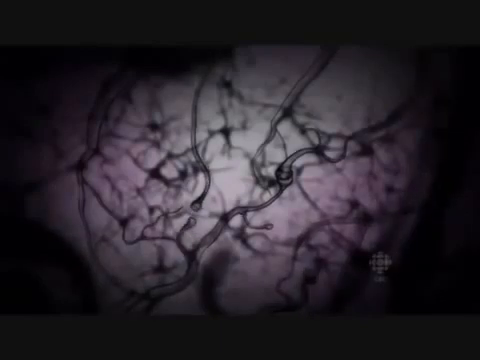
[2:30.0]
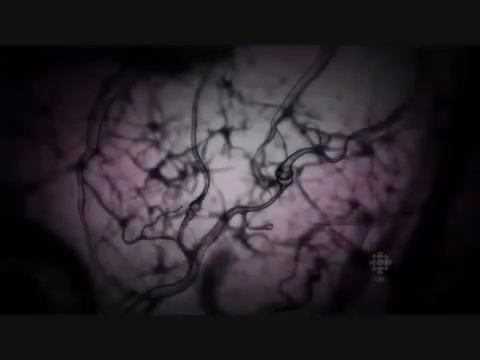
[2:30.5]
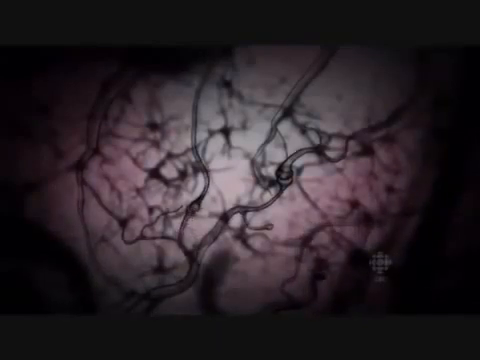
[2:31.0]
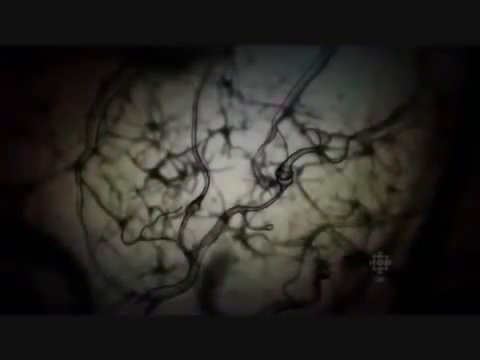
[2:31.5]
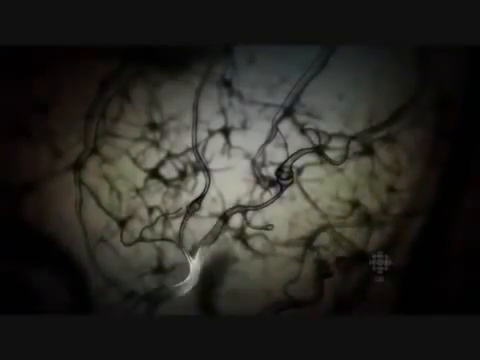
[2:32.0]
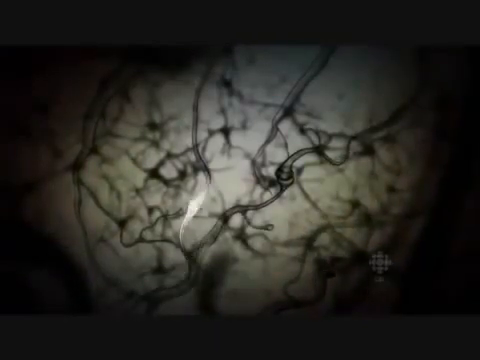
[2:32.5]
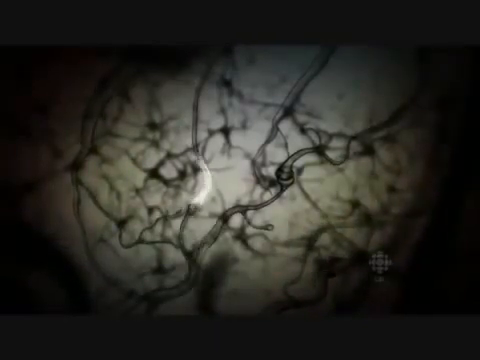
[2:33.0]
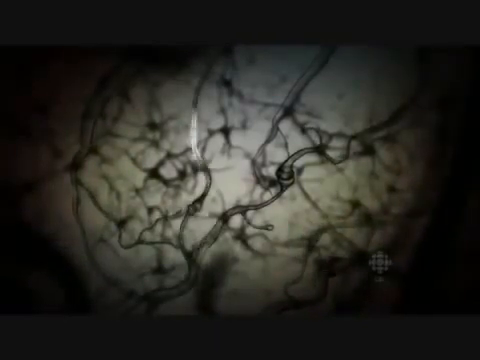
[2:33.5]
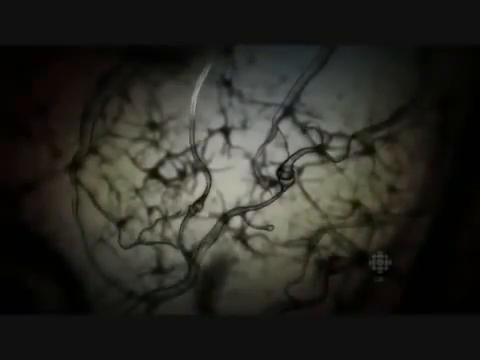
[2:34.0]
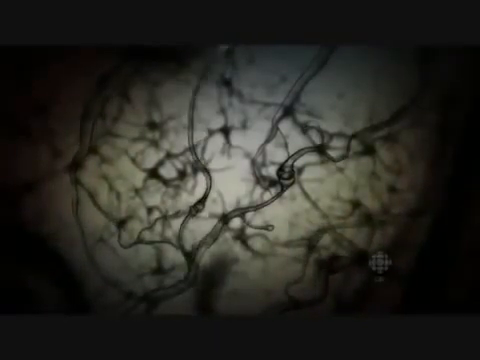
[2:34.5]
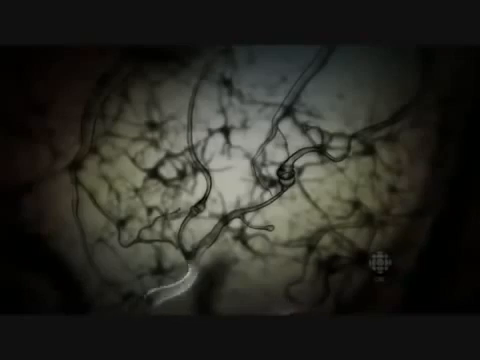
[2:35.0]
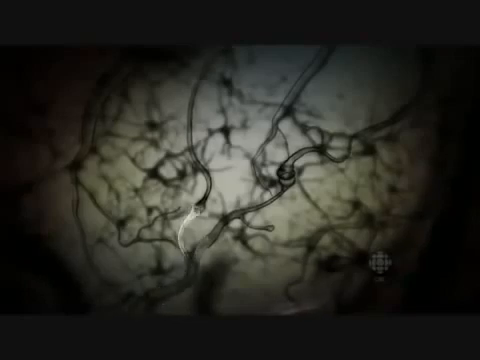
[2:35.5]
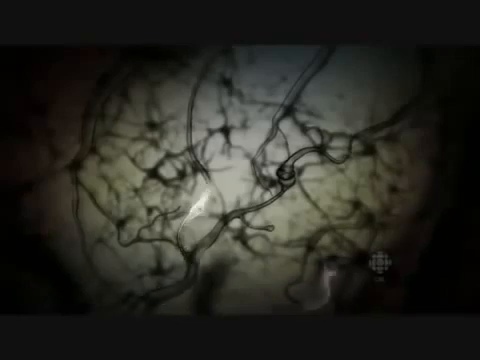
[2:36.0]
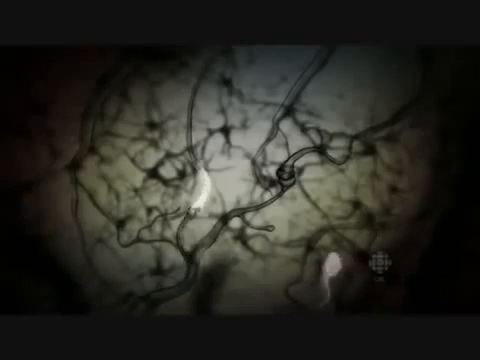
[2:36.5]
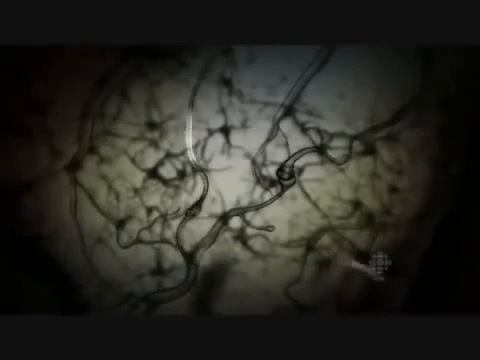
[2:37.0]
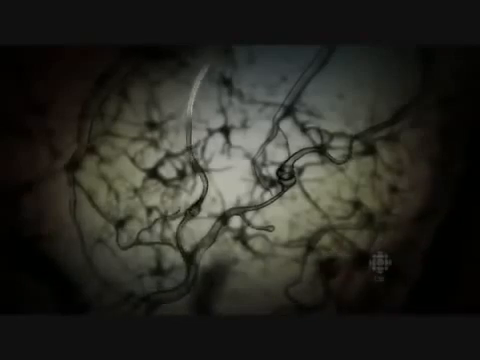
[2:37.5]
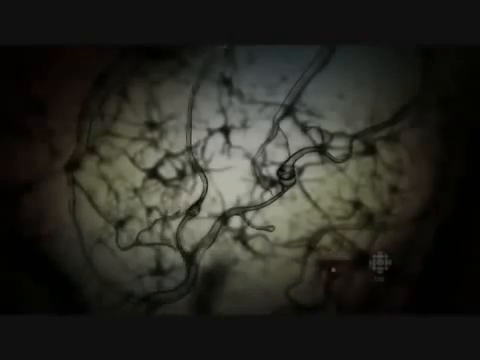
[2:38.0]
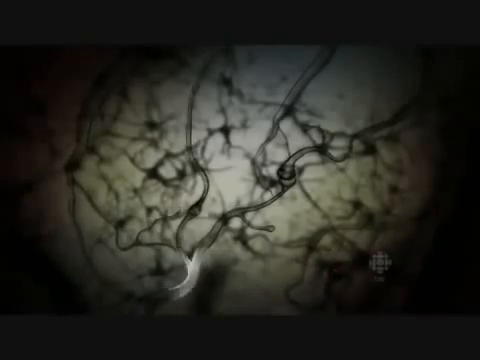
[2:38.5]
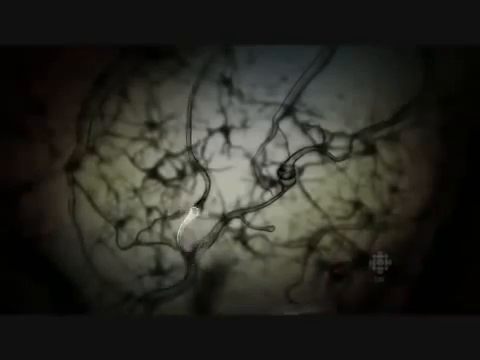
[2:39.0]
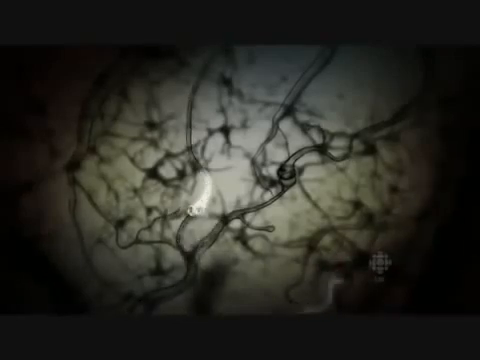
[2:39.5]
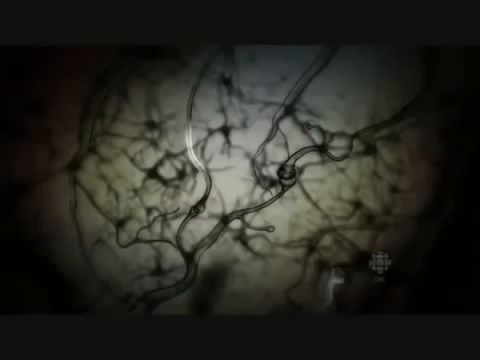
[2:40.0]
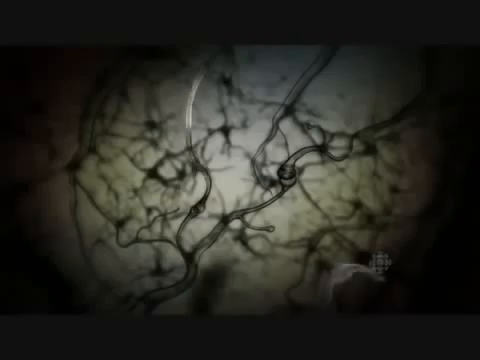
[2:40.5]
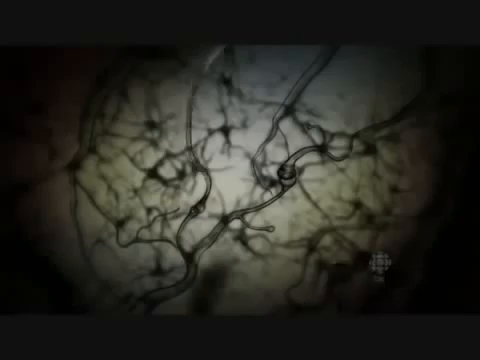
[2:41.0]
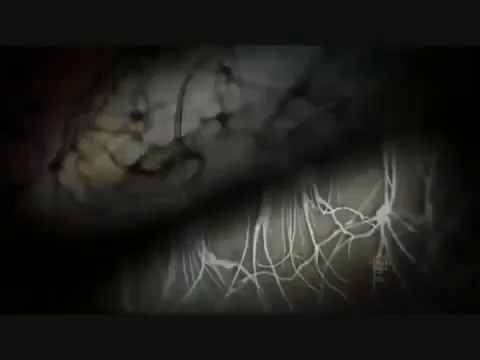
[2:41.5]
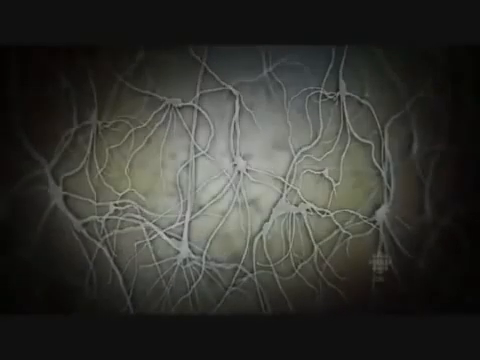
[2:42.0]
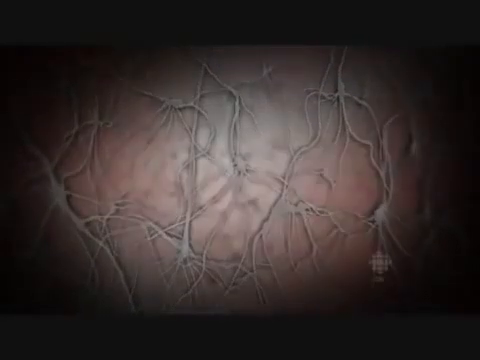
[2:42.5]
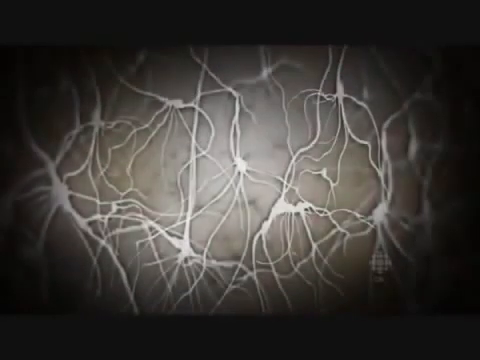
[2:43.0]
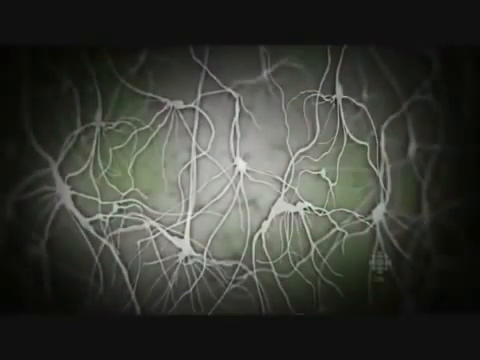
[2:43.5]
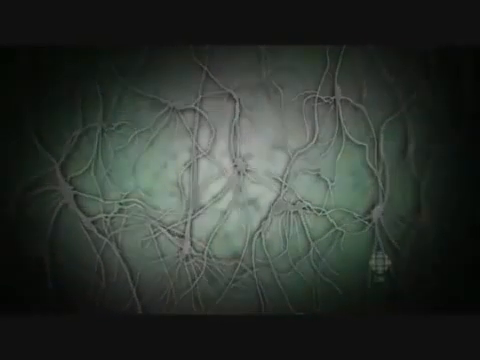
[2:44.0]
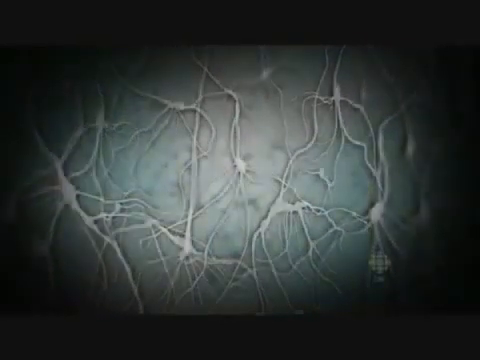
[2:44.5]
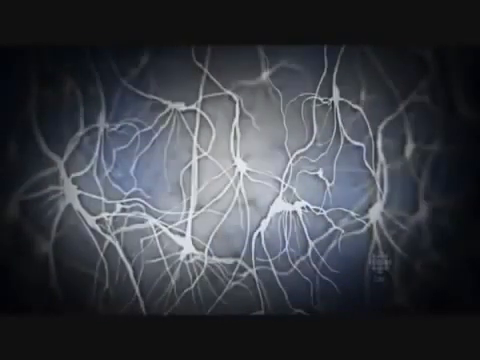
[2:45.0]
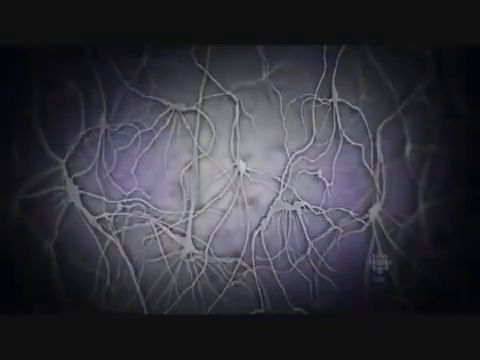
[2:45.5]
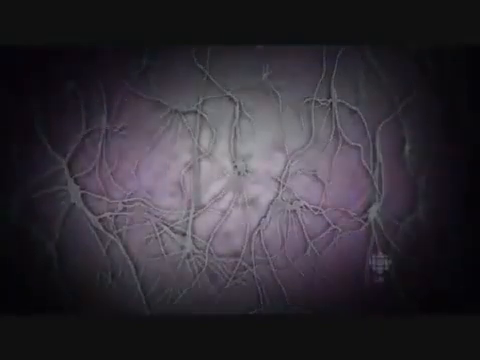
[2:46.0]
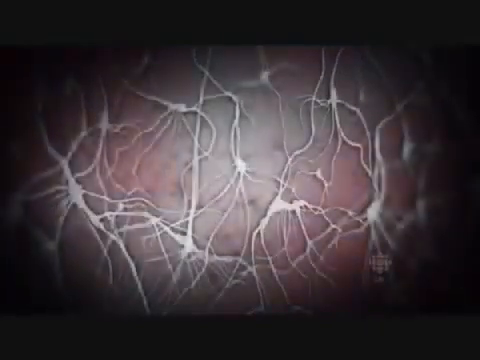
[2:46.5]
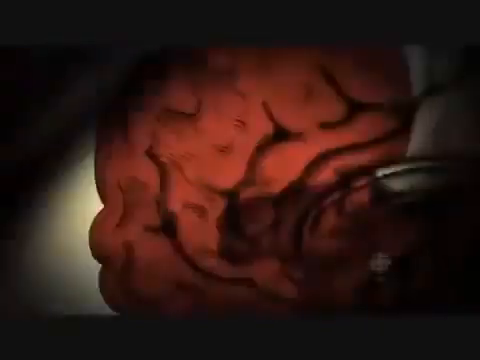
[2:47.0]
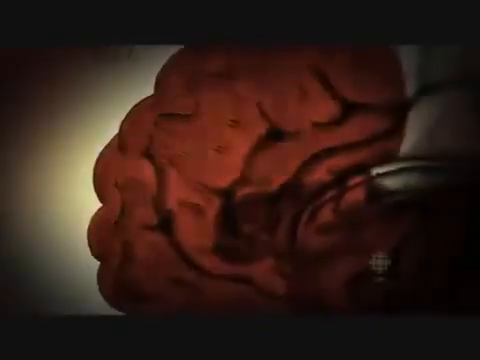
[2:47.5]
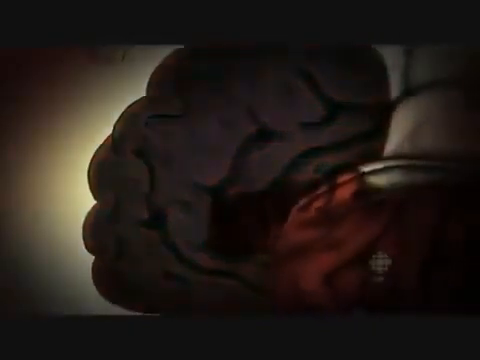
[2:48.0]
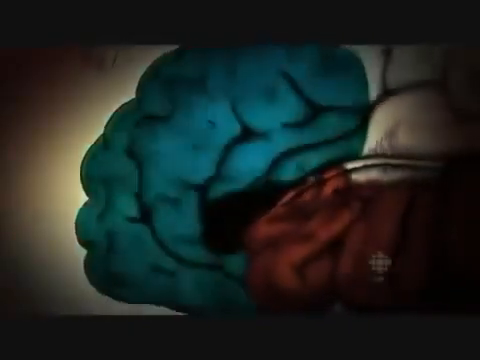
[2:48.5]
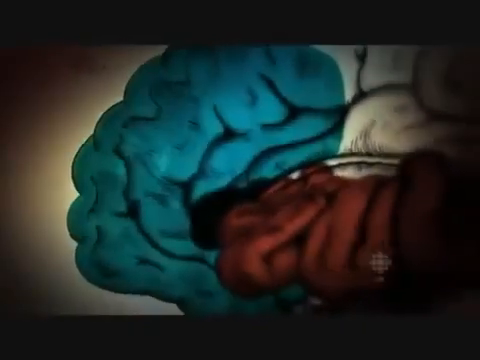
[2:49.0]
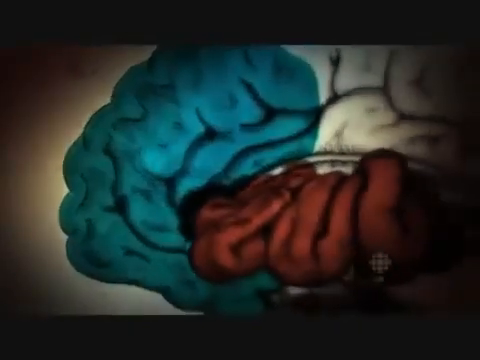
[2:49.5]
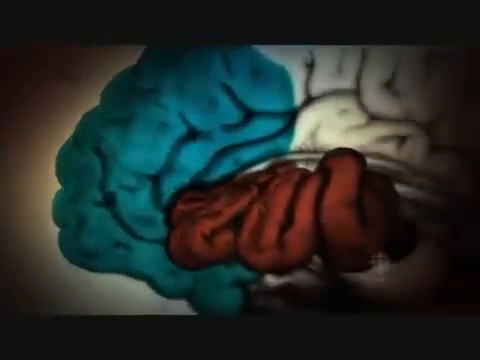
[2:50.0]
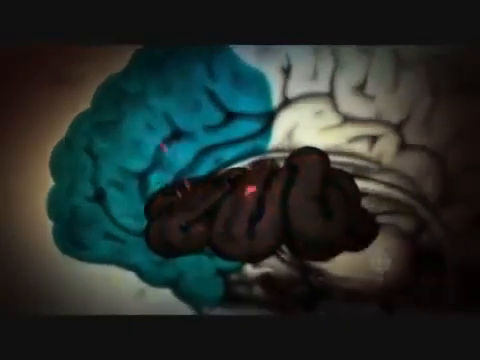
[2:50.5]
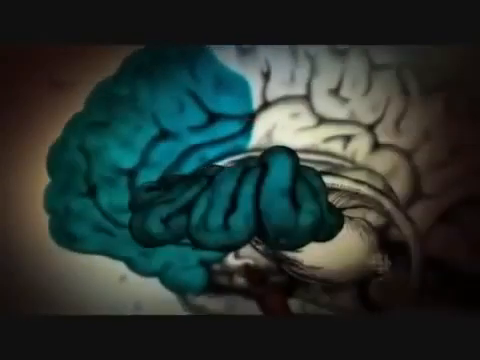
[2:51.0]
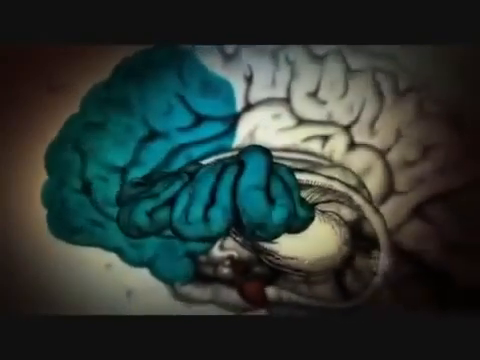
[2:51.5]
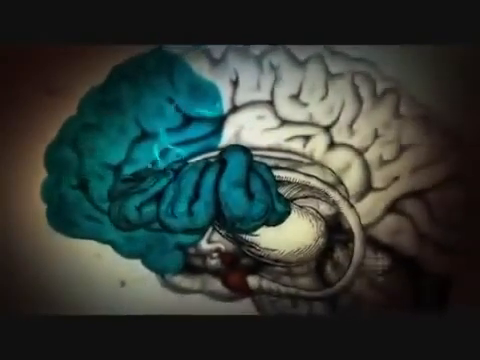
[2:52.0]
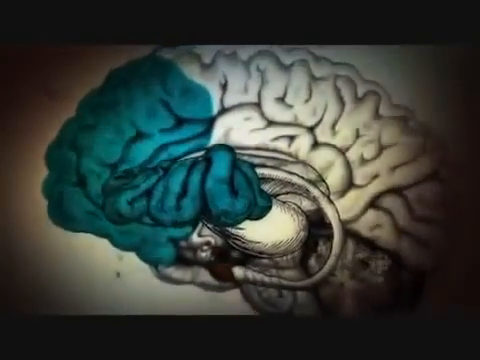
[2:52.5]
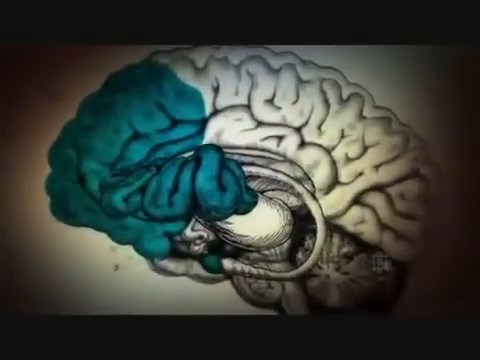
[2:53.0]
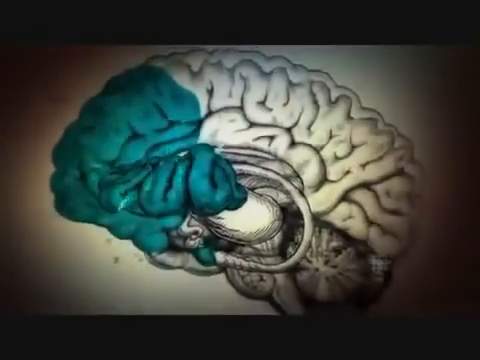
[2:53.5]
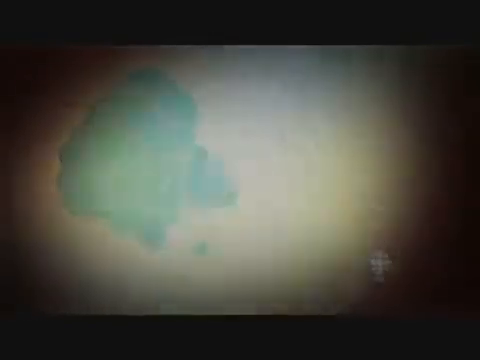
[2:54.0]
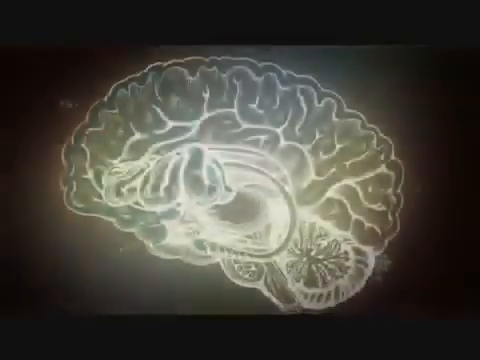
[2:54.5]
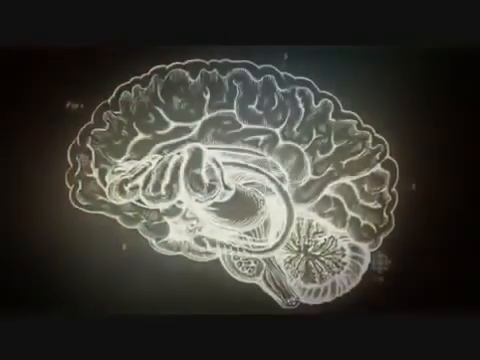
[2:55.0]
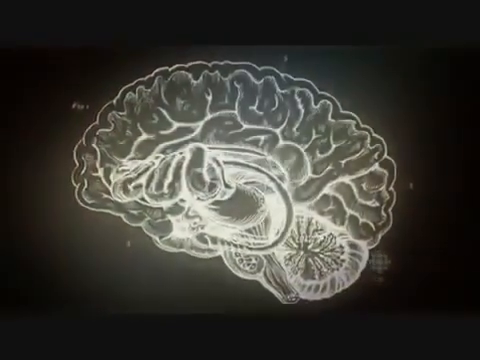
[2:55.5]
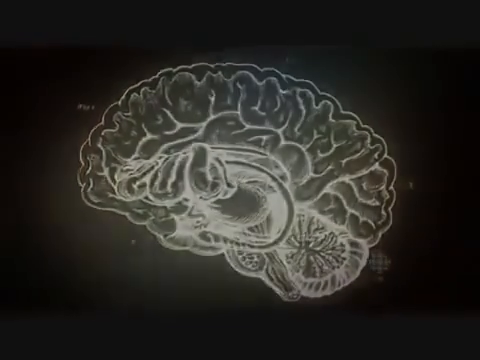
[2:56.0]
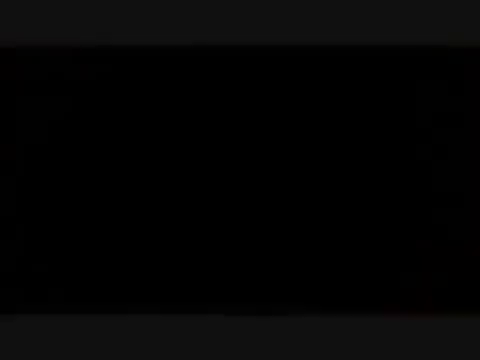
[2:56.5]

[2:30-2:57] Light keeps traveling through the neurons from the bottom left side upward, repeatedly, and in the distance toward the bottom right side the same thing happens, with light traveling through neurons. The scene changes to a whole bunch of bright white neurons connected almost like spiderwebs, which repeatedly go dark and glow again. In a different scene, the back part of the brain is red and then turns a teal color as the camera shifts to the right side. The center and the back of the brain are teal, and waves of light go through the teal color. Everything becomes bright until the whole brain is bright, like an x-ray screen. Then it all goes dark, and the screen is black.